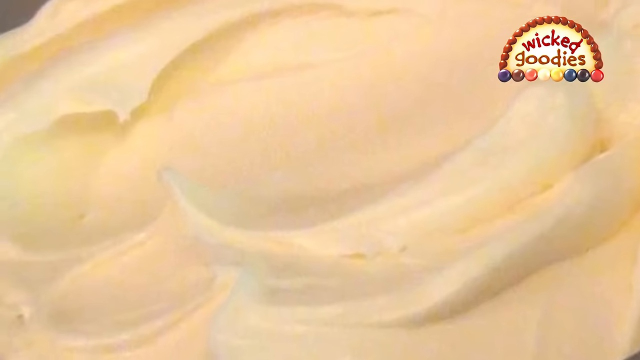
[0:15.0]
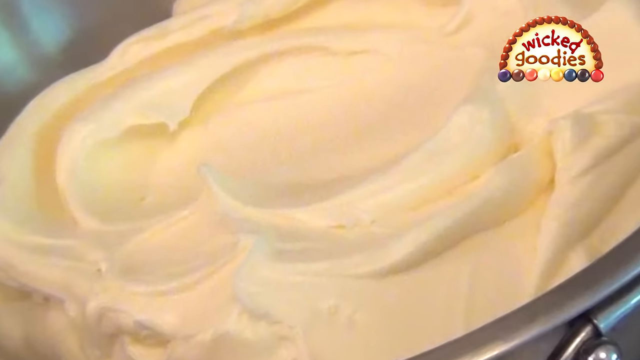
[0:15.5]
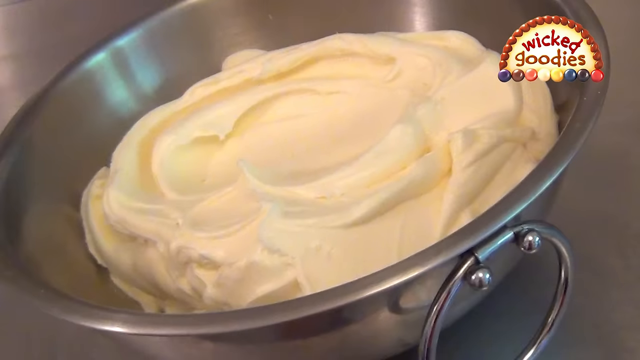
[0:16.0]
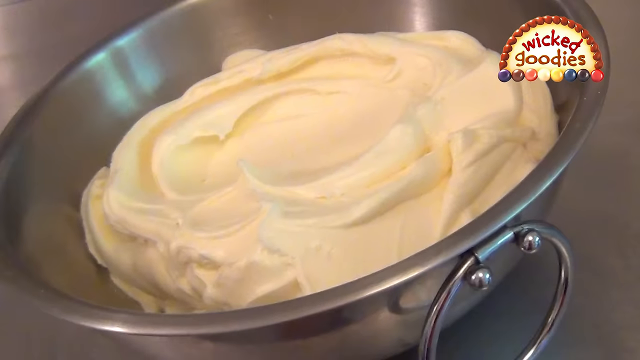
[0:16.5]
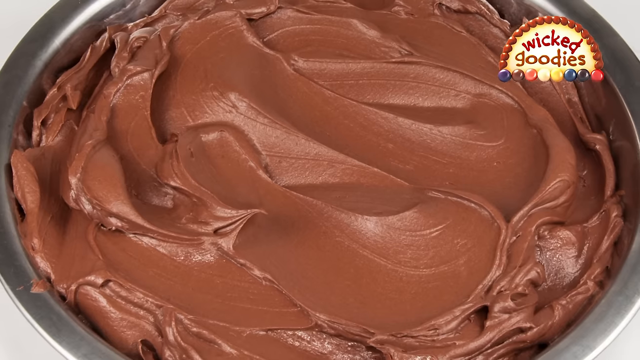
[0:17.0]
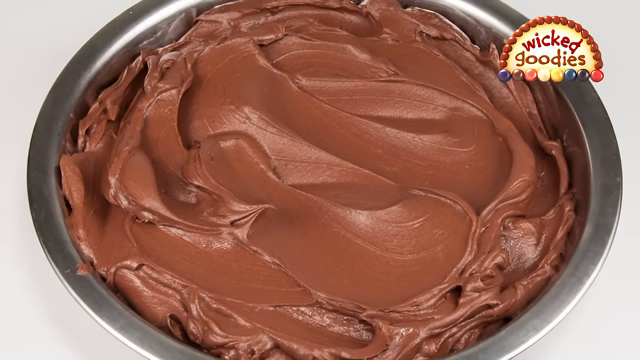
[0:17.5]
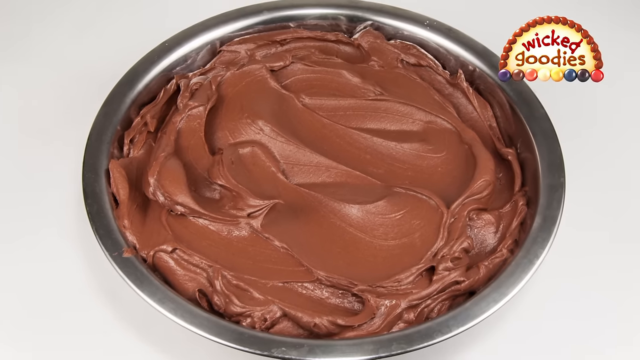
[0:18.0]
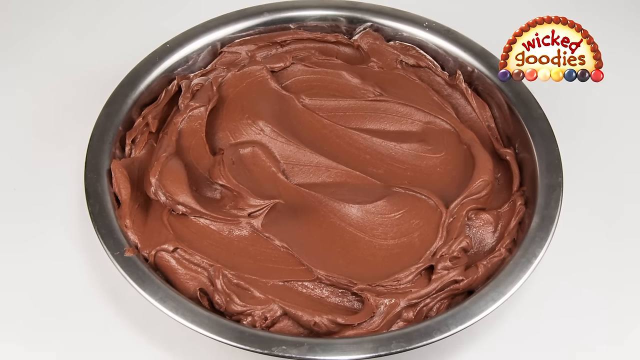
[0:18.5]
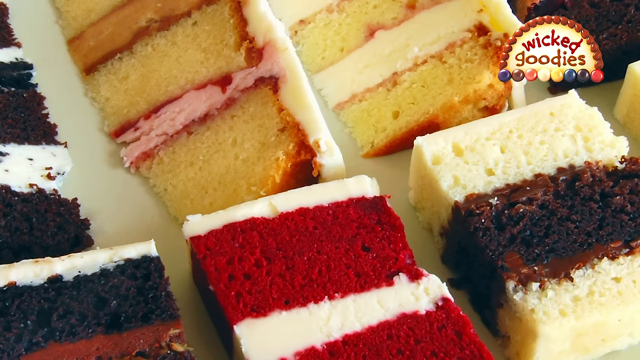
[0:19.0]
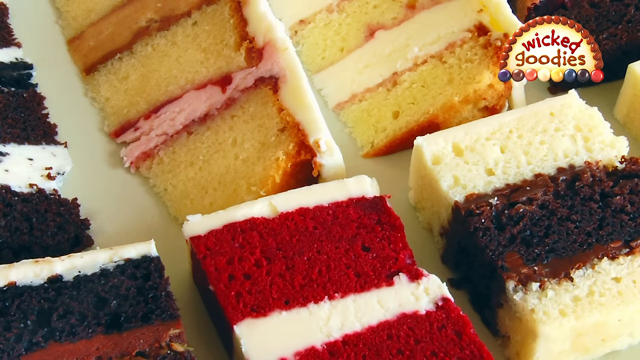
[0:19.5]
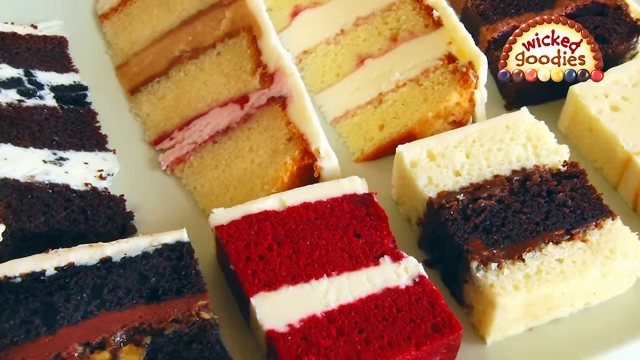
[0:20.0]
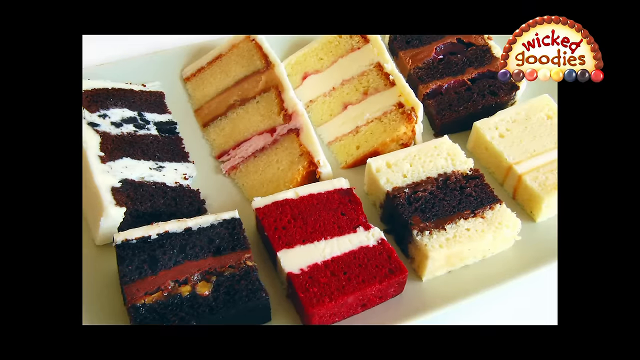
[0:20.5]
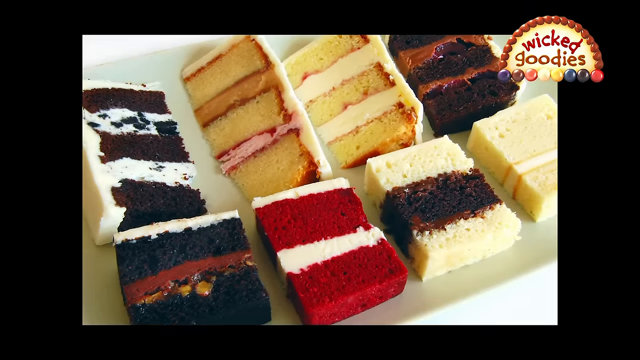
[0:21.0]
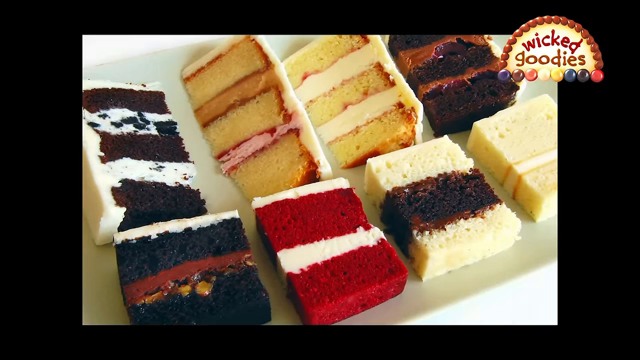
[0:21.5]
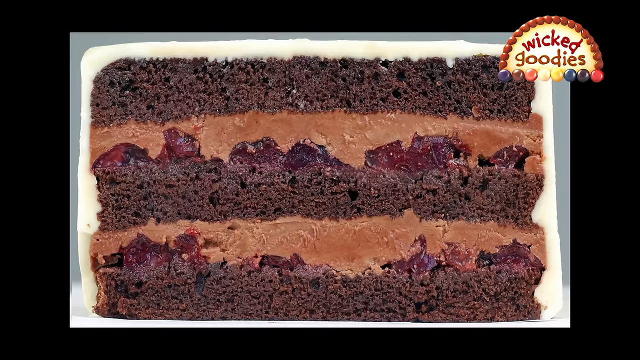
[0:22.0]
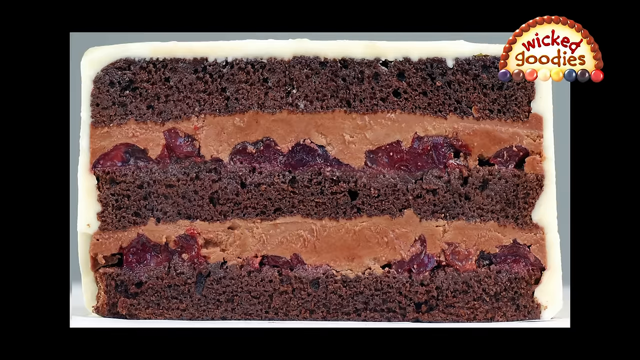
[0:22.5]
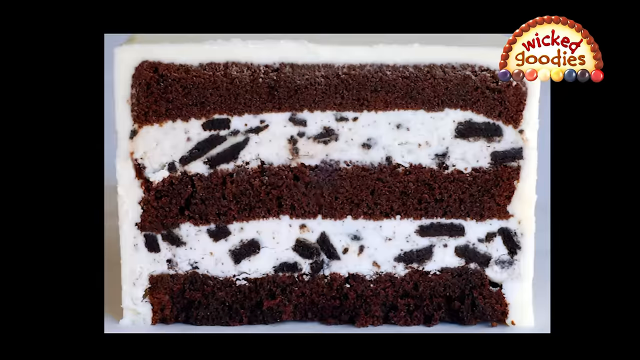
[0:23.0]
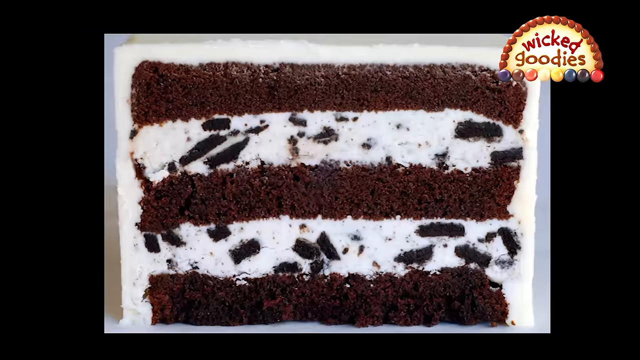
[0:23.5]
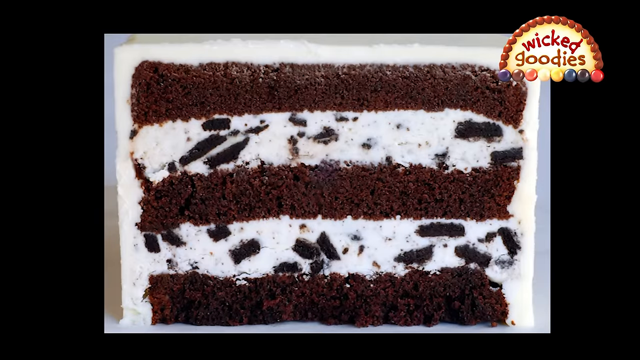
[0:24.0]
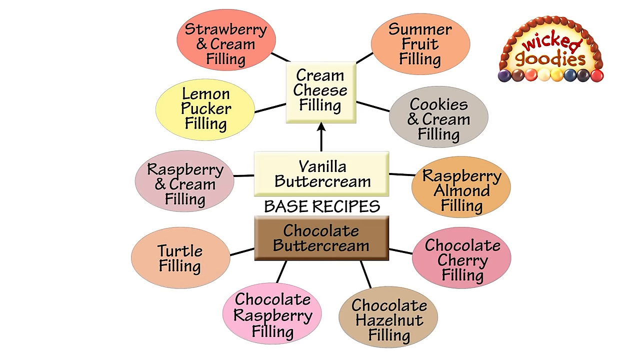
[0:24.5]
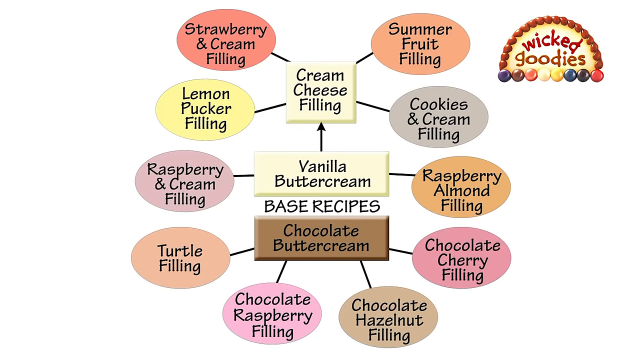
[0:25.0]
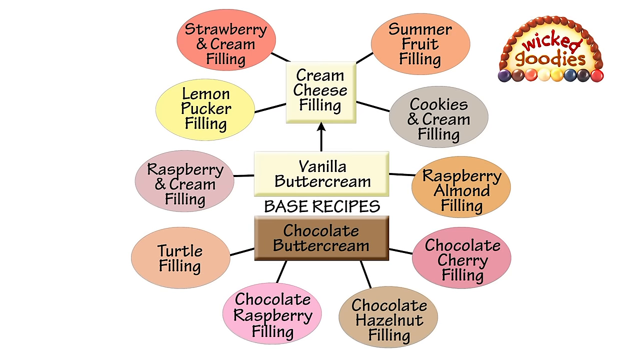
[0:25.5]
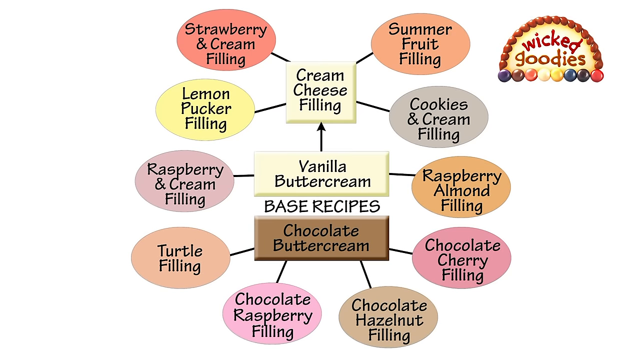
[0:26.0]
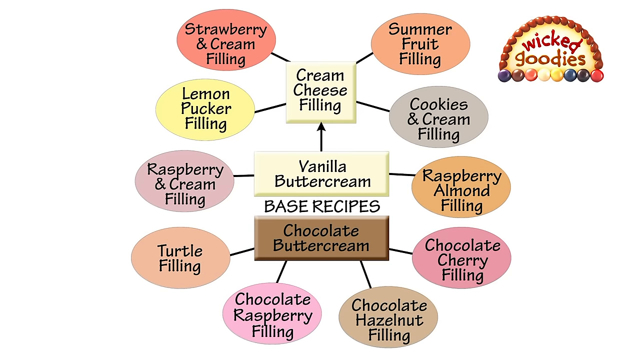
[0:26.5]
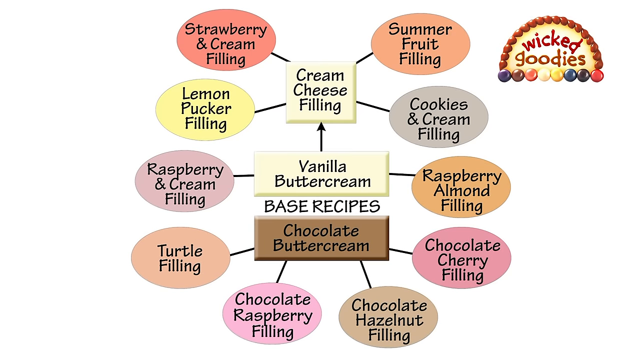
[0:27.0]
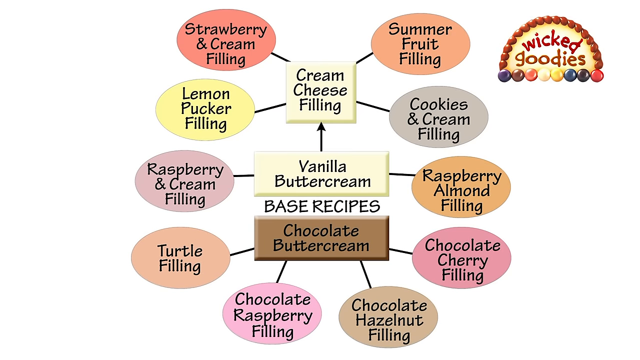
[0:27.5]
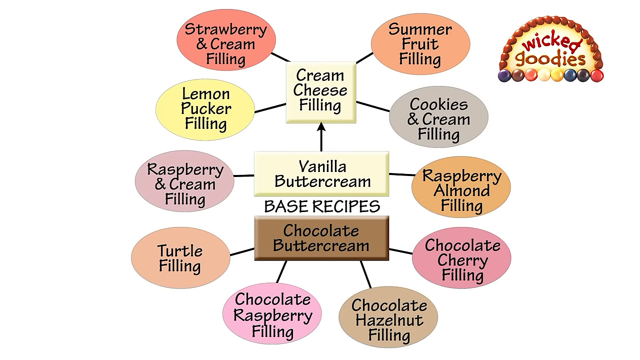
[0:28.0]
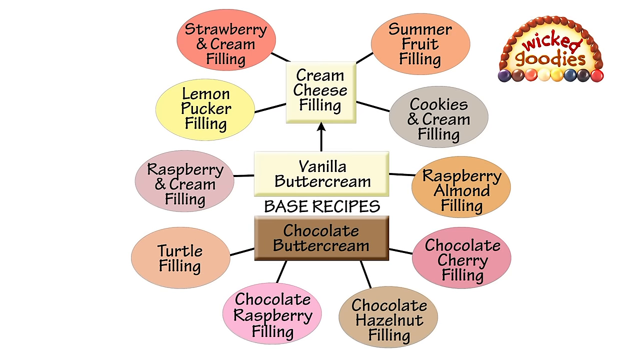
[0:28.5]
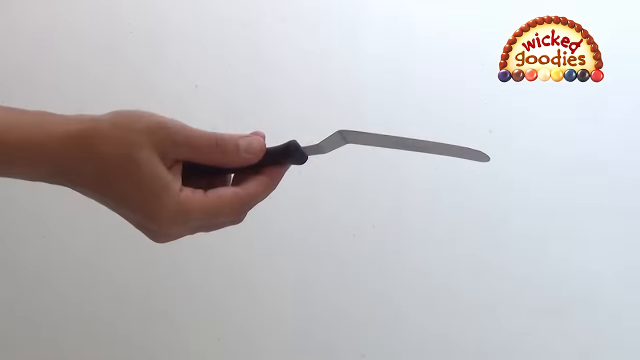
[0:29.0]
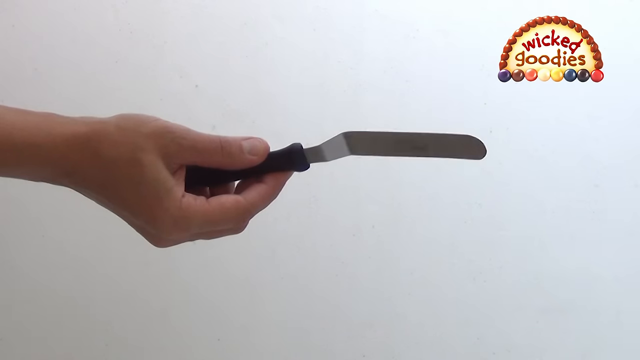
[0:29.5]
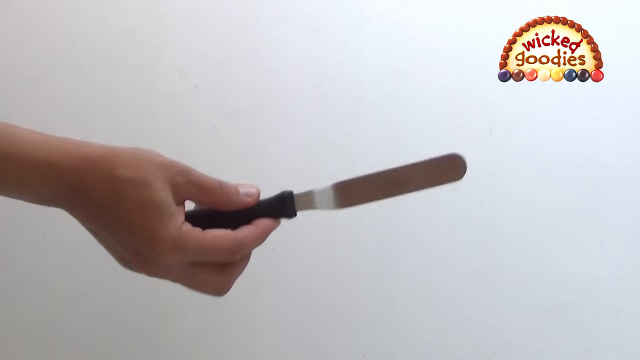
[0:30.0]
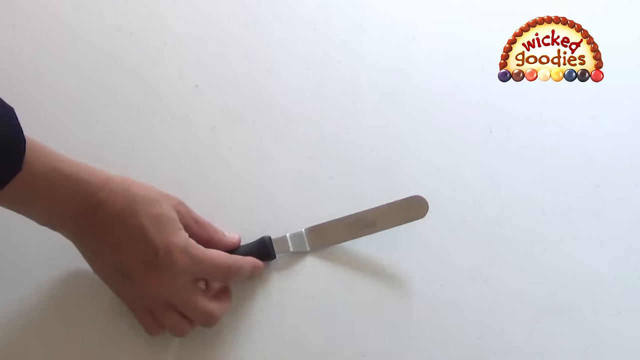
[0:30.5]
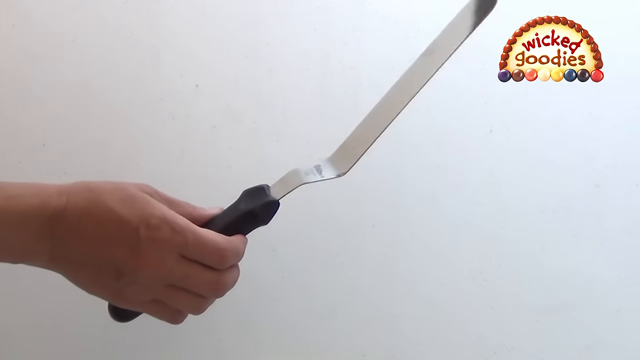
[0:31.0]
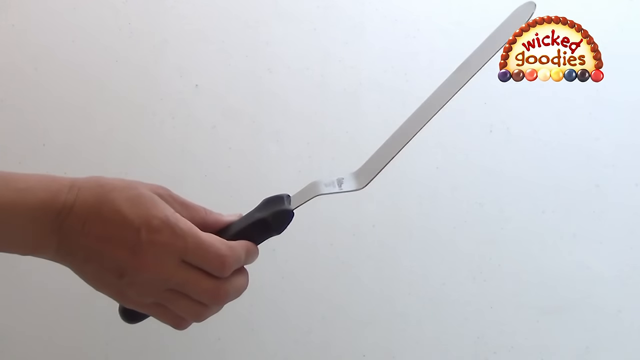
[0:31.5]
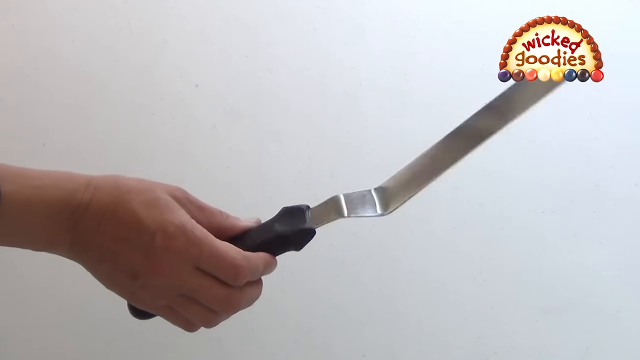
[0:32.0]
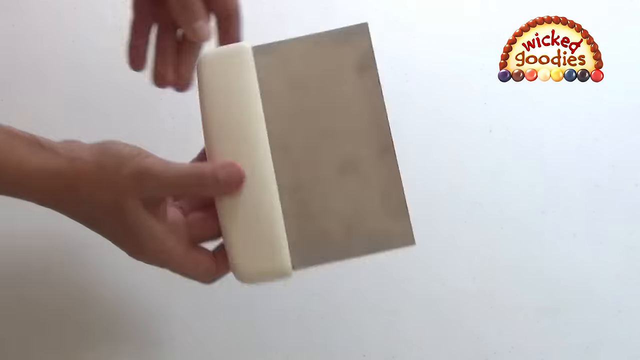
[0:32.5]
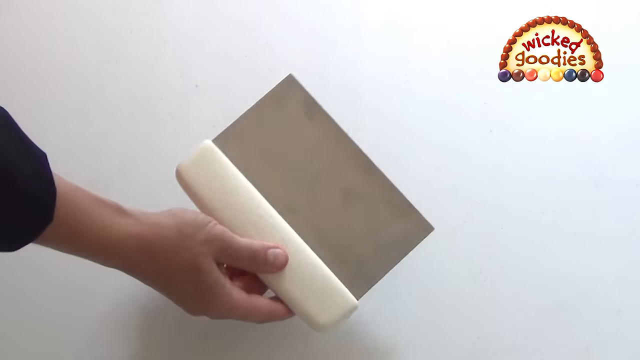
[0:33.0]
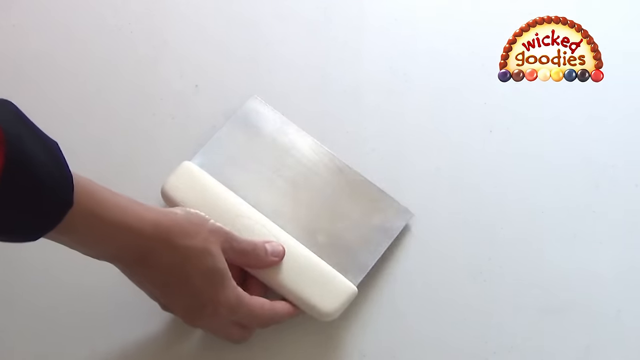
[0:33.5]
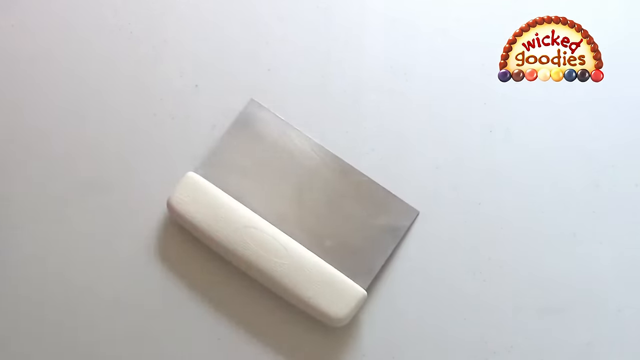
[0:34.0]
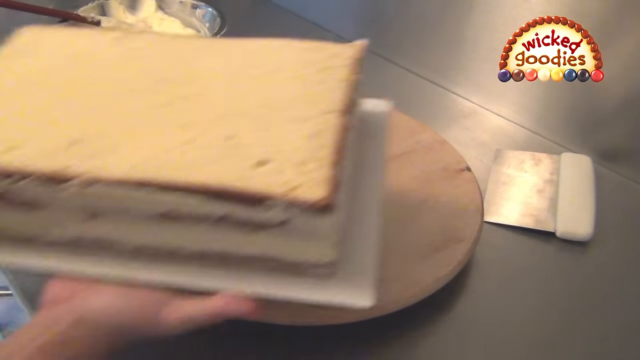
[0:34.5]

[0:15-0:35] A yellow mixture seems to have a whipped consistency, so it is possibly buttercream frosting rather than butter. Next, another metal bowl holds a brown mixture that seems to be chocolate. Multiple slices of cake follow, including red velvet, vanilla, chocolate and yellow cake, all cut into thin layers with some sort of mixture between them, apparently about two or three layers; the mixtures are either buttercream or a red substance. Everything seems to be frosted nicely, and the slices seem very uniform. Then comes a chocolate three-layered cake, followed by another chocolate cake whose layers seem to be separated by possibly cookies and cream, as they are white and black. A chart follows that says "vanilla buttercream" in the very center and "base recipes," seemingly covering how to make vanilla buttercream, cream cheese filling and chocolate buttercream. Vanilla buttercream can have a raspberry almond filling or a raspberry and cream filling. An arrow goes from vanilla buttercream to cream cheese filling, which can be lemon pucker filling, strawberry and cream filling, summer fruit filling, or cookies and cream filling. Chocolate buttercream can have a turtle filling, chocolate raspberry filling, chocolate hazelnut filling, or chocolate cherry filling. Next, someone holds a very thin spatula, then what seems to be a silver frosting spreader with a white top is shown, followed by a two-layer cake that has not been fully decorated.